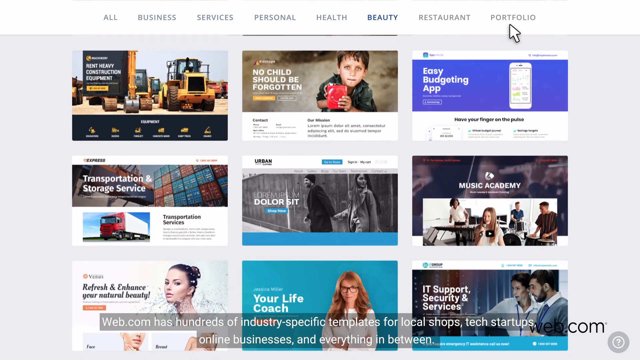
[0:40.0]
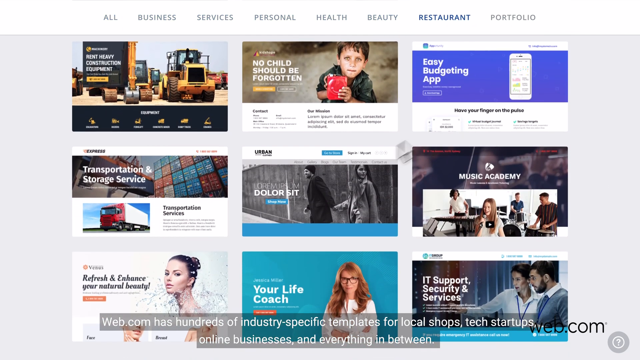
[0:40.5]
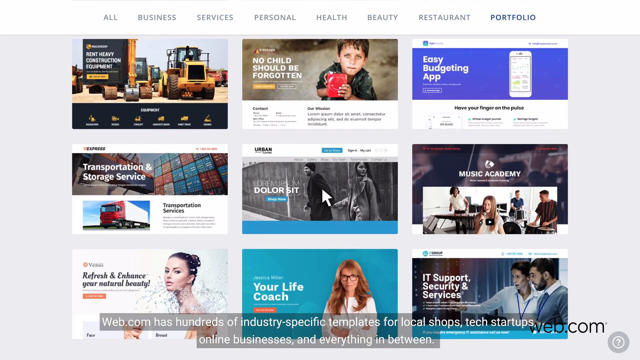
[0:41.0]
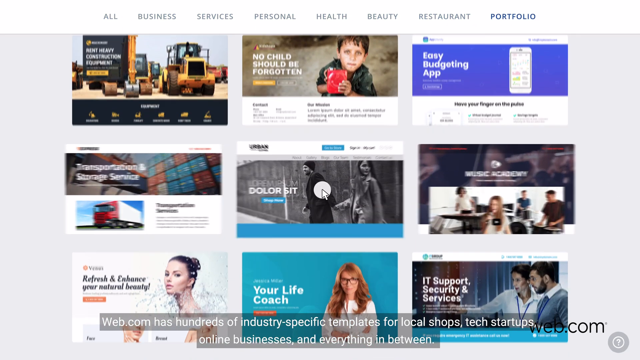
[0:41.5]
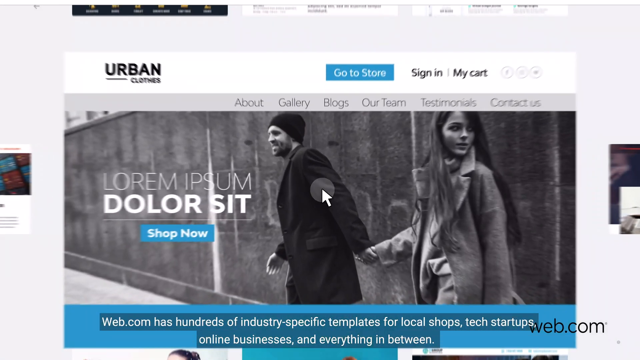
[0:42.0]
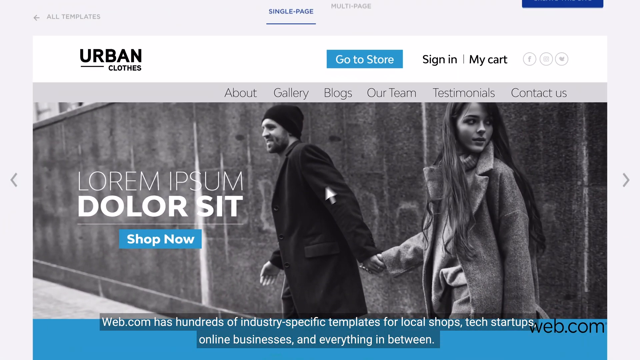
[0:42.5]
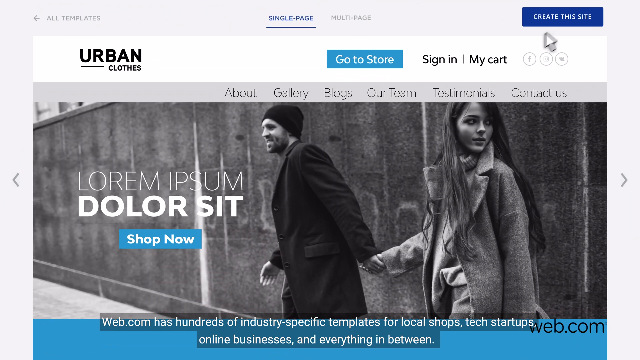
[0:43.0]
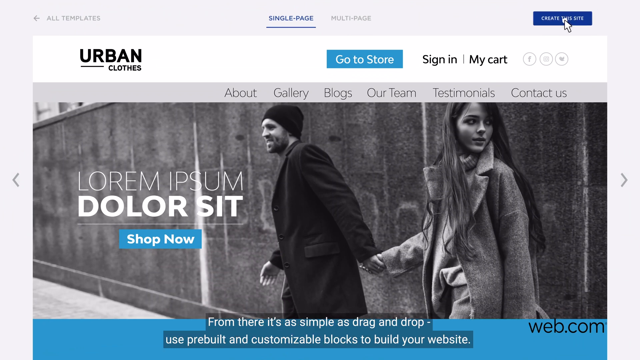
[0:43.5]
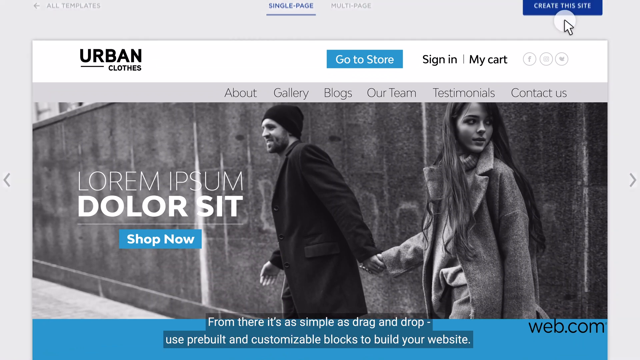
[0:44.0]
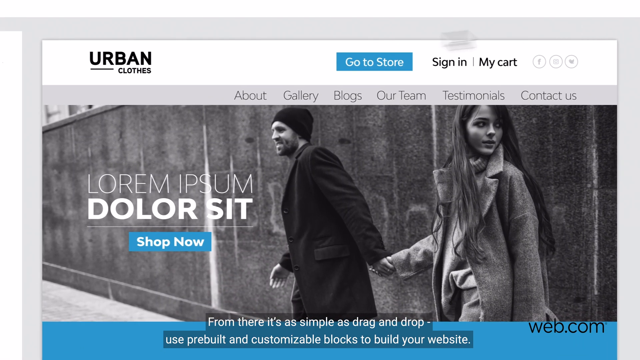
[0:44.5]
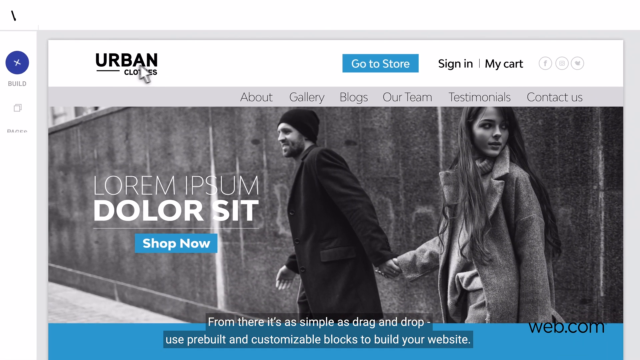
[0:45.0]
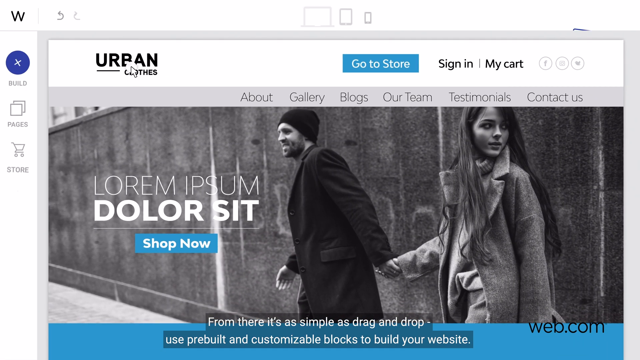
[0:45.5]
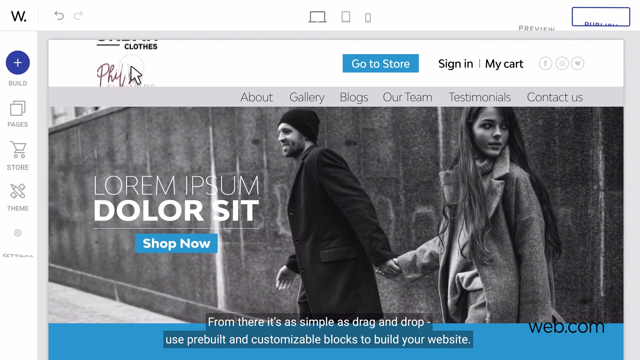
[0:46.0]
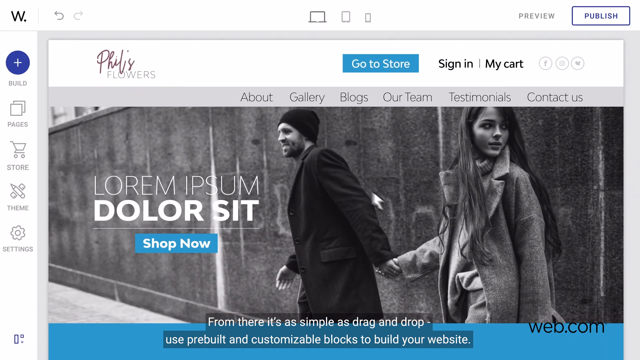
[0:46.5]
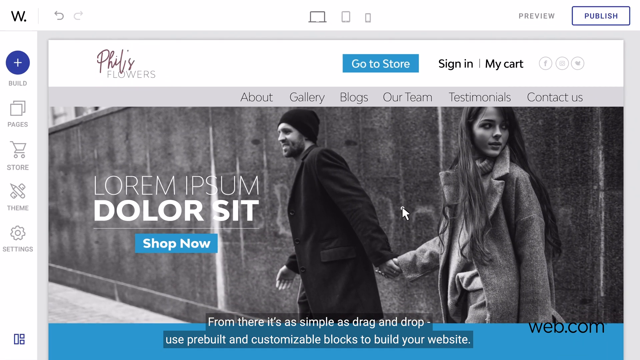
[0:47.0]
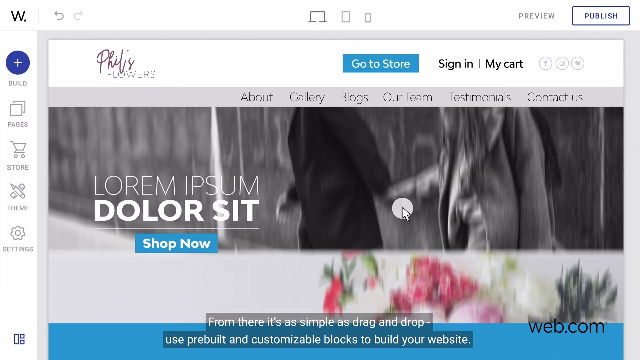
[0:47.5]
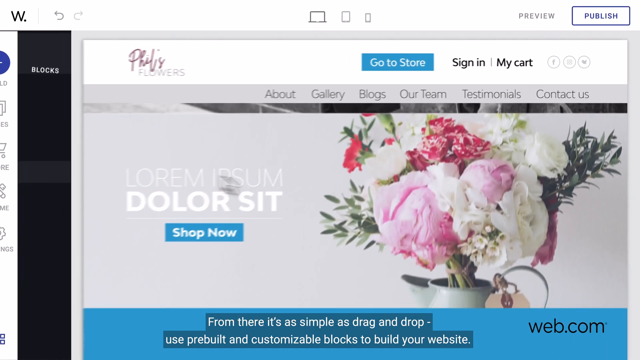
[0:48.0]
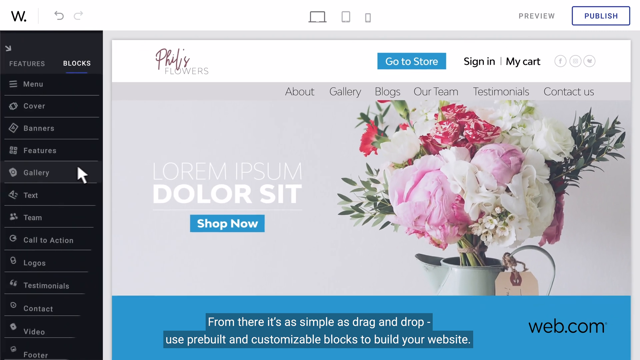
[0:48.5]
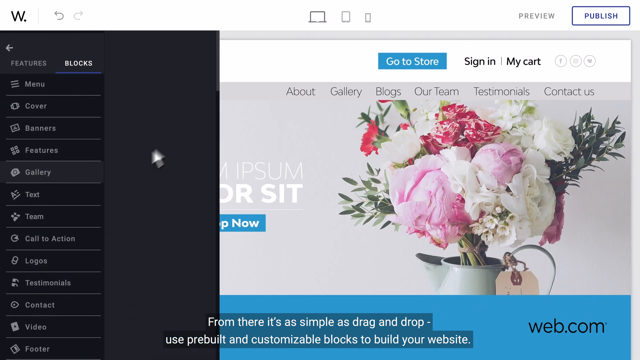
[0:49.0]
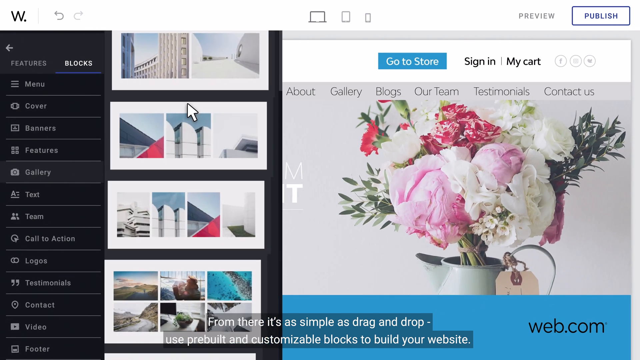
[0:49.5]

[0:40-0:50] A website is being created, and a template has been chosen. The template has a large photograph as its background showing a man and a woman outdoors, walking along a wall in a city. The man appears to be looking toward the street; he wears a long dark coat and a beanie, looks unshaven, and is smiling. He holds the hand of the woman, who is looking back down the street with a curious look on her face; she has long hair and a long, light-colored jacket. Over the photo is placeholder text beginning "Lorem Ipsum" and a button that says "Shop Now". At the top is a logo that says "Urban Clothes", buttons saying "Go to Store", "Sign In" and "My Cart", and a few social network buttons. Underneath is a submenu with gallery, blogs, our team, testimonials, and "Contact Us".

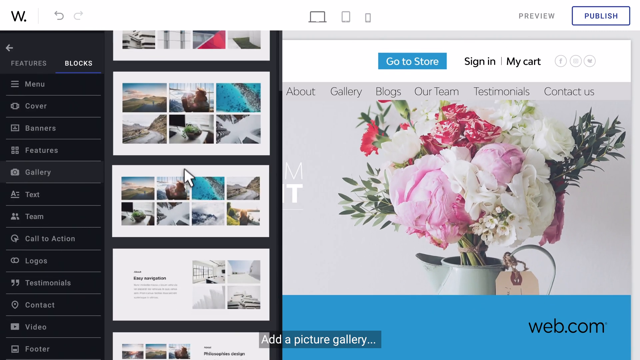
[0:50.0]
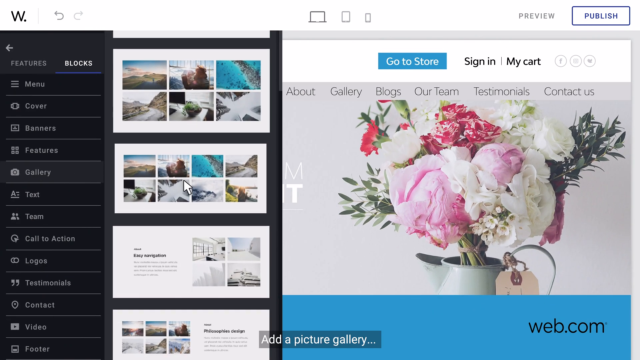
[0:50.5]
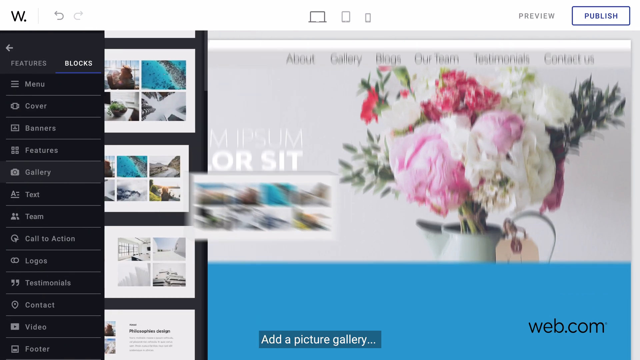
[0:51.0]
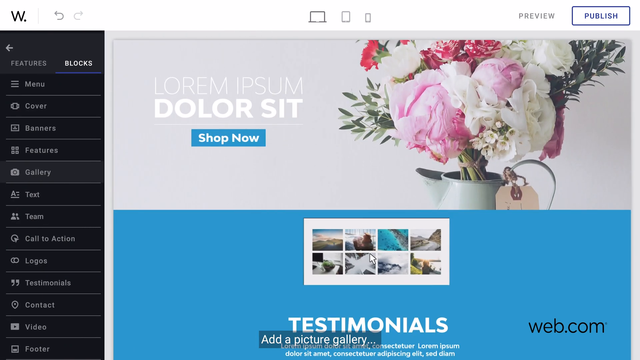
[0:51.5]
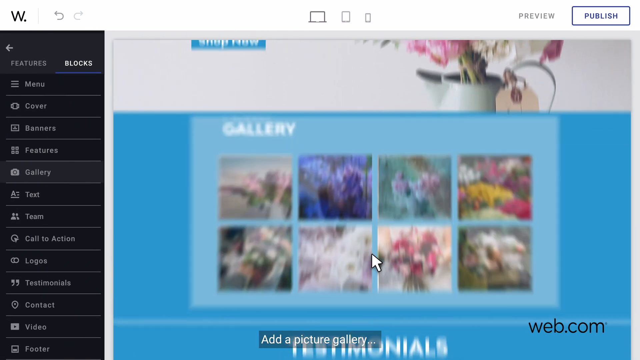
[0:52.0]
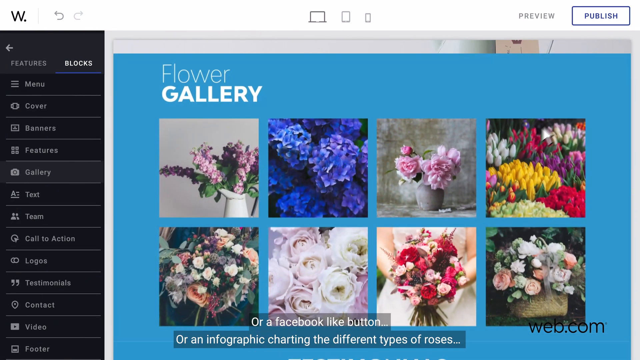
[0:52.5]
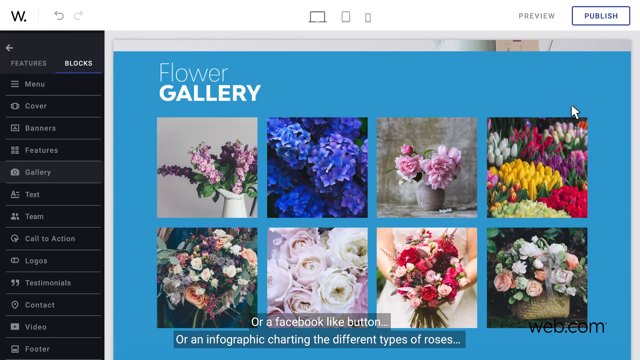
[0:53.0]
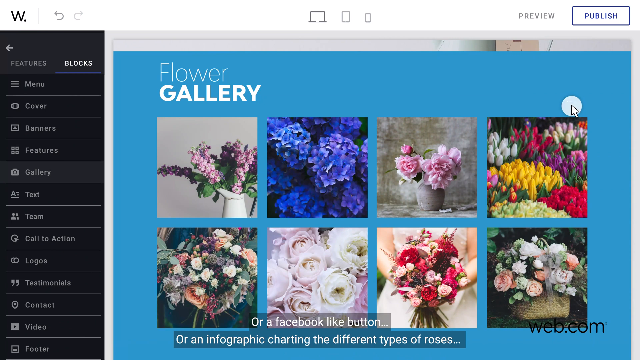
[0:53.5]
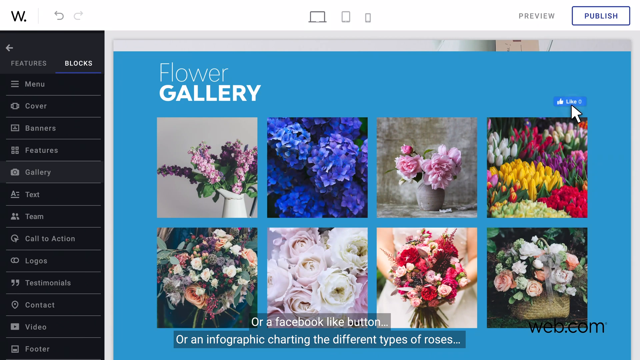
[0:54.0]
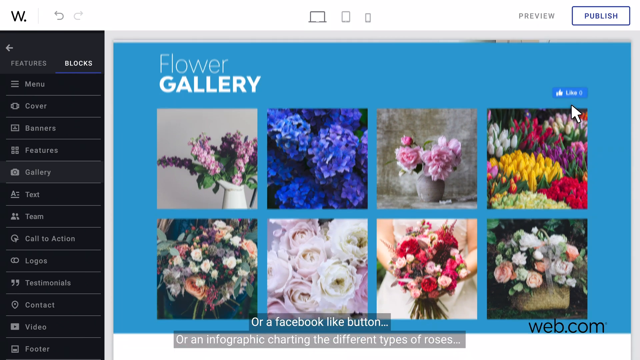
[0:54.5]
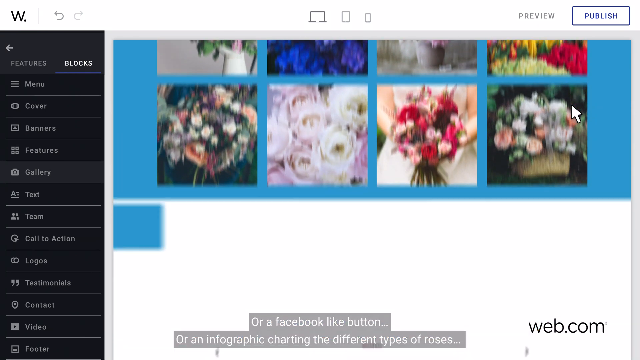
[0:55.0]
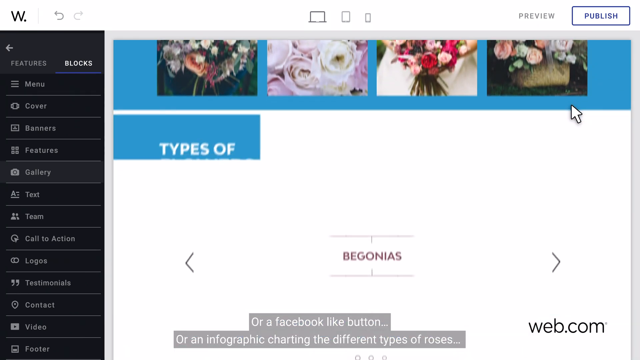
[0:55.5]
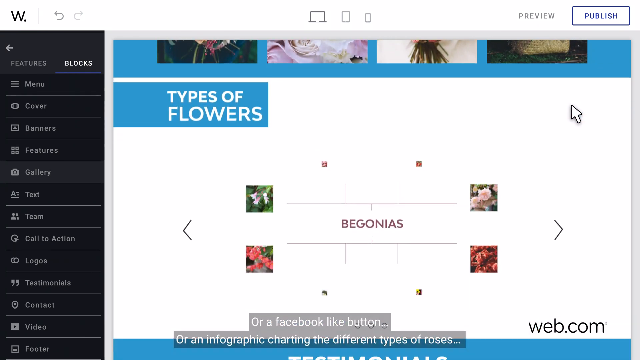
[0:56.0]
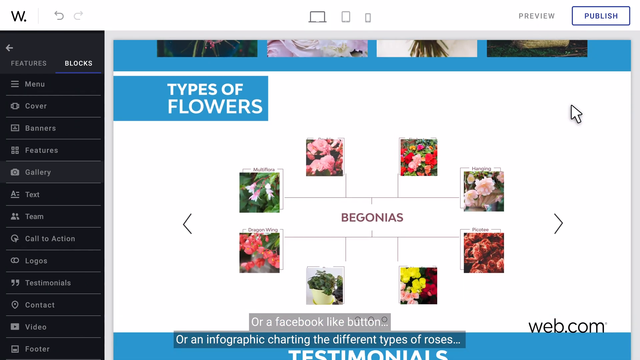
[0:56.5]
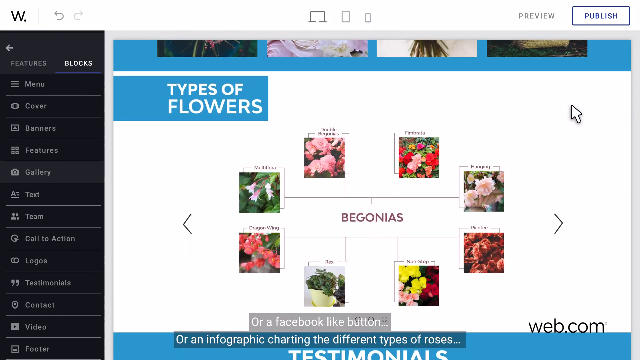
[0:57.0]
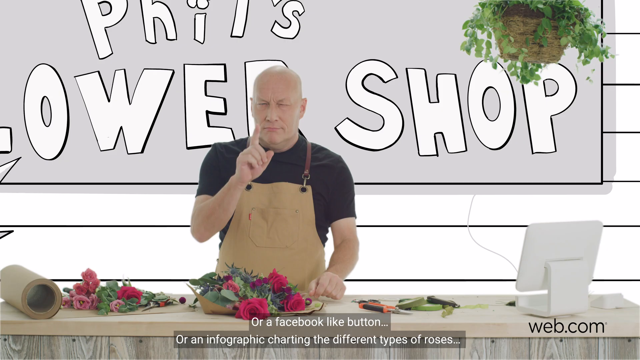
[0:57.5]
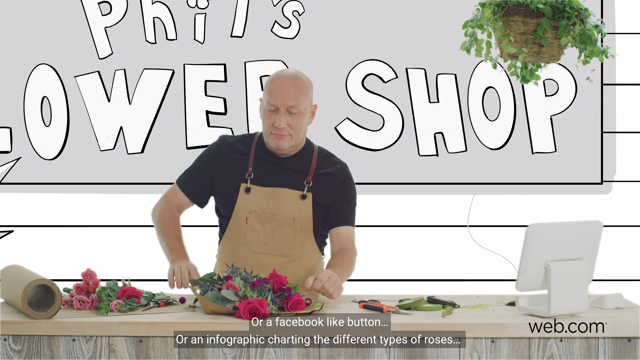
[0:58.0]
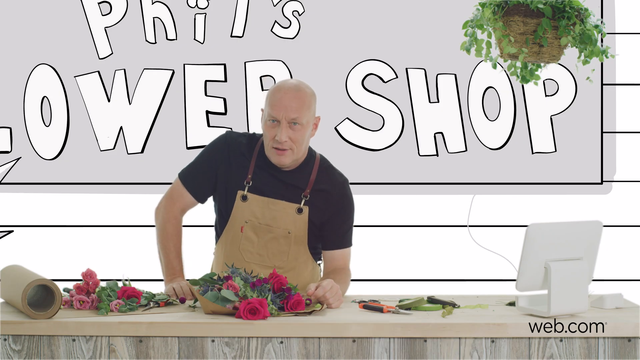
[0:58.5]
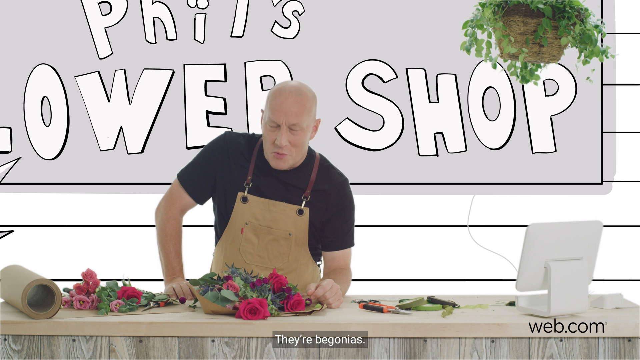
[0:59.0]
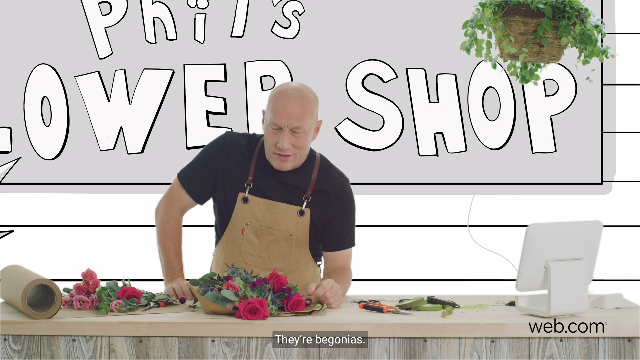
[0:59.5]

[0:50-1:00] Pictures can be selected on the website, which has a flower gallery and an option to choose types of flowers with pictures. More elements are added to the website. Subtitles read "or Facebook like buttons", and a mouse pointer clicks on a like button on the website. A types-of-flowers tool says "begonias" and has eight images of flowers around it with lines pointing to them, presumably letting users click on the flower they want. Then the same man appears in a closer shot, standing behind the photo-style counter with flowers on top of it. He leans with his left elbow on the counter, his right hand on the counter. He wears a tan apron and a black shirt and looks into the camera with a more serious look. The cartoon-style logo of Phil's flower shop is in the background.